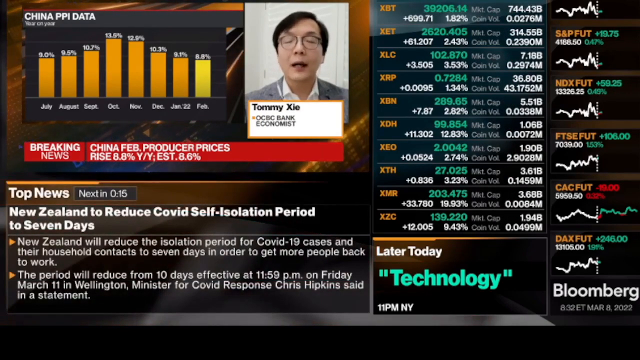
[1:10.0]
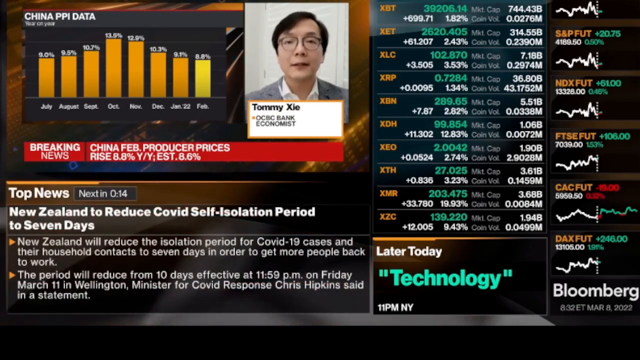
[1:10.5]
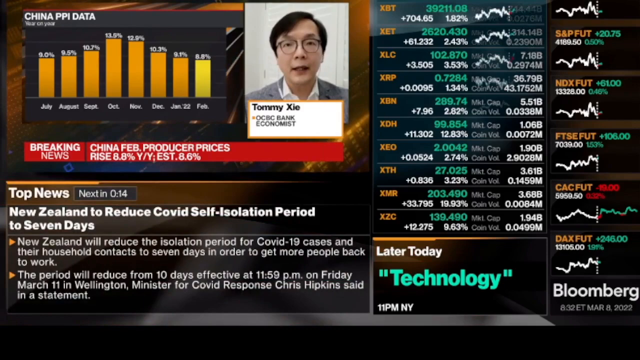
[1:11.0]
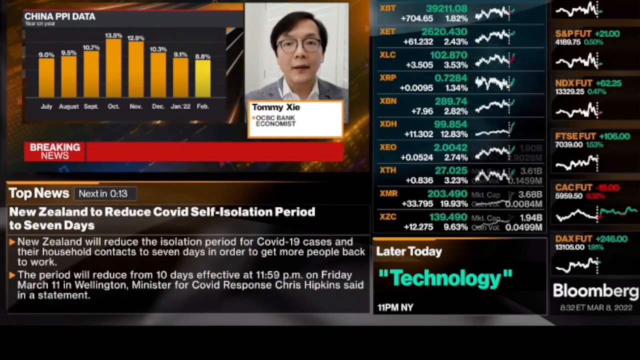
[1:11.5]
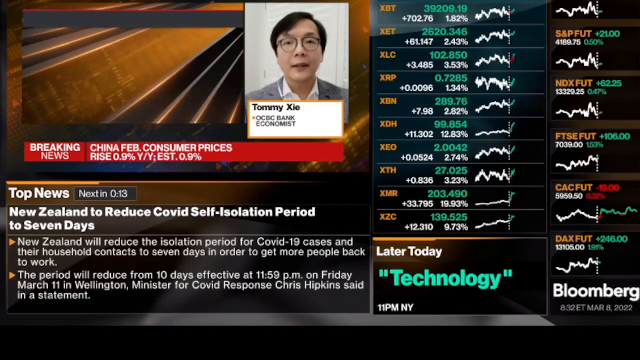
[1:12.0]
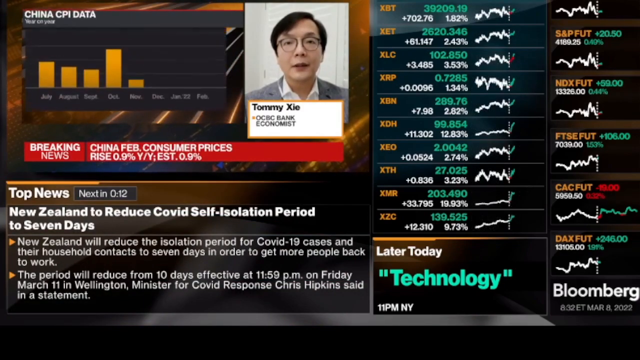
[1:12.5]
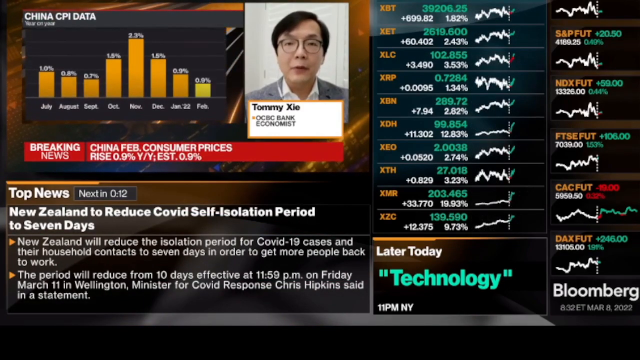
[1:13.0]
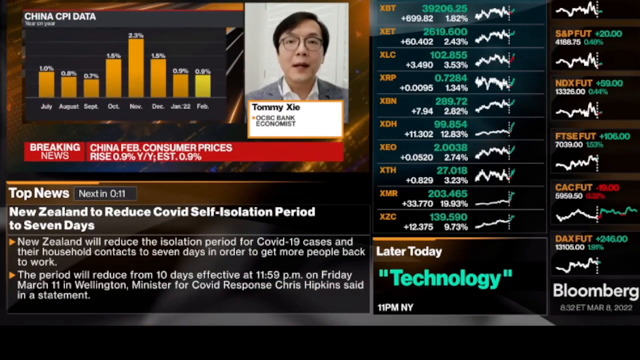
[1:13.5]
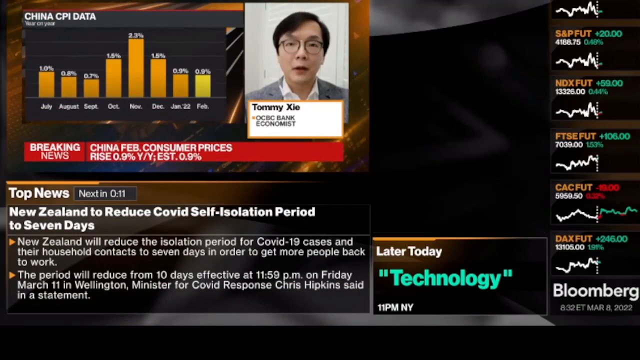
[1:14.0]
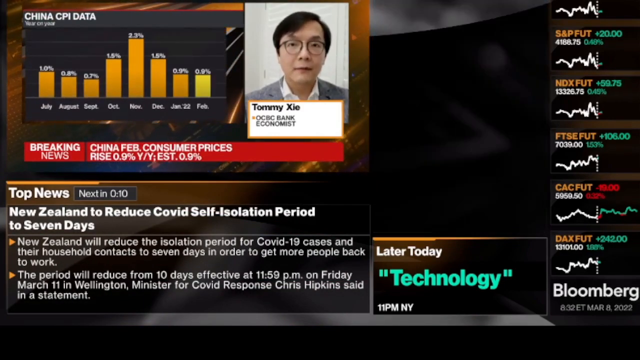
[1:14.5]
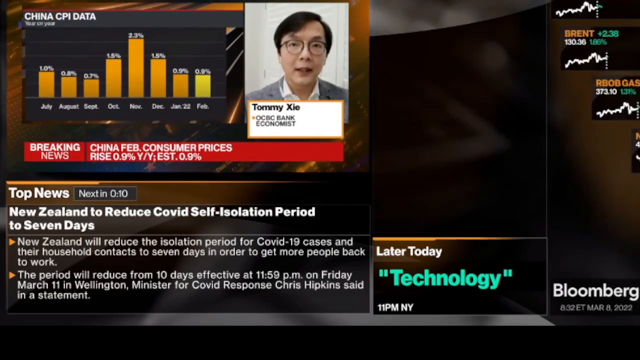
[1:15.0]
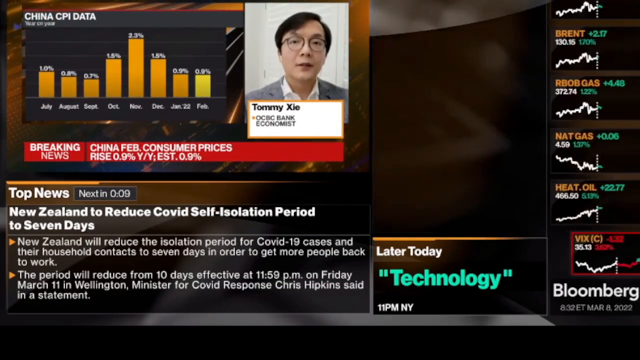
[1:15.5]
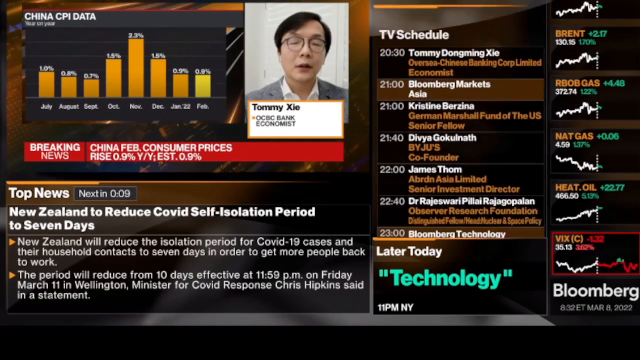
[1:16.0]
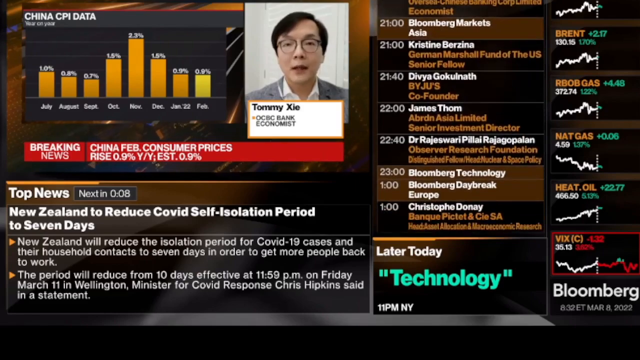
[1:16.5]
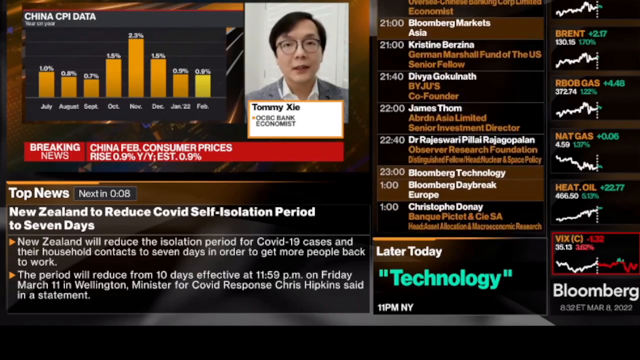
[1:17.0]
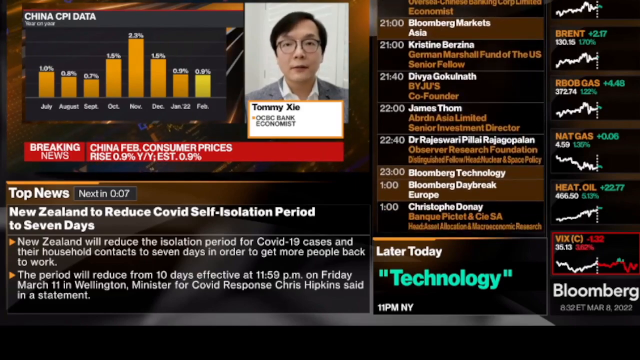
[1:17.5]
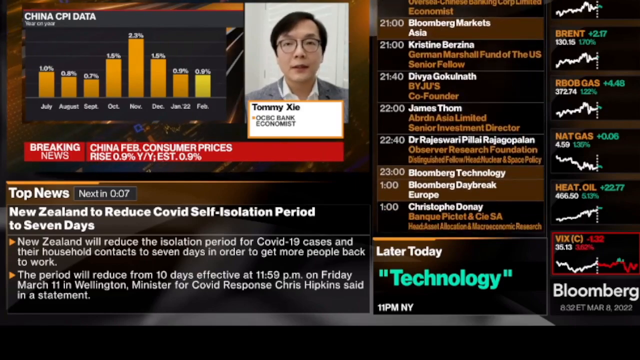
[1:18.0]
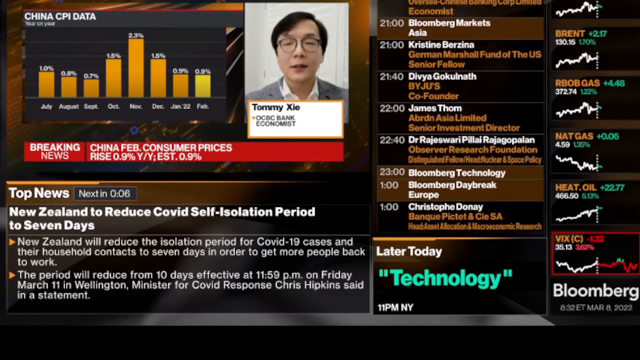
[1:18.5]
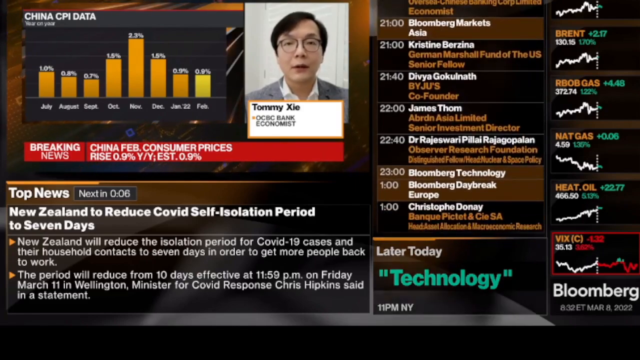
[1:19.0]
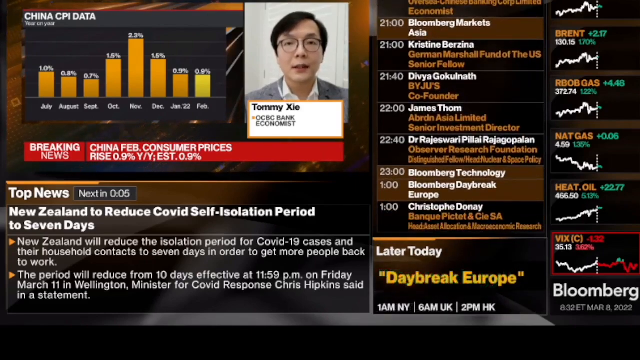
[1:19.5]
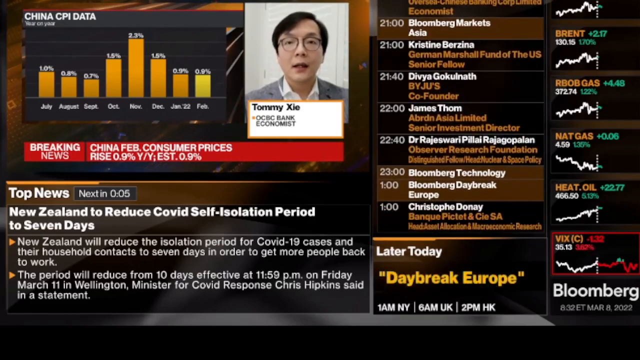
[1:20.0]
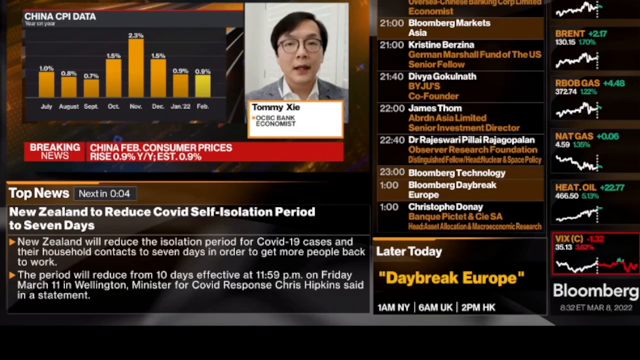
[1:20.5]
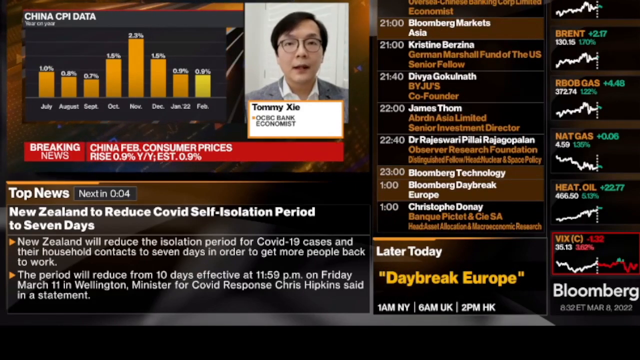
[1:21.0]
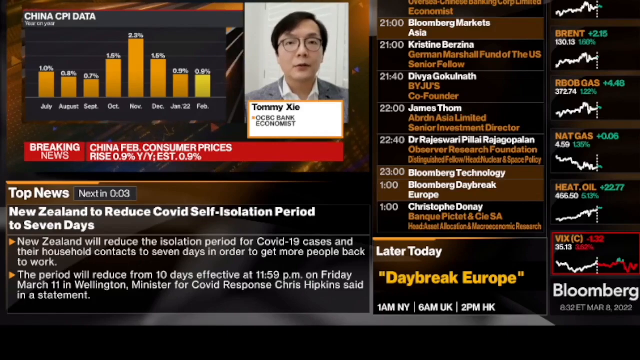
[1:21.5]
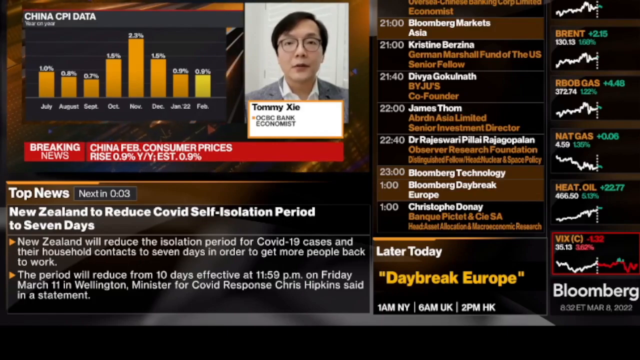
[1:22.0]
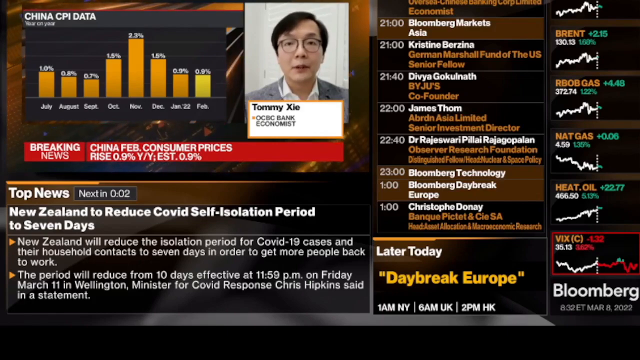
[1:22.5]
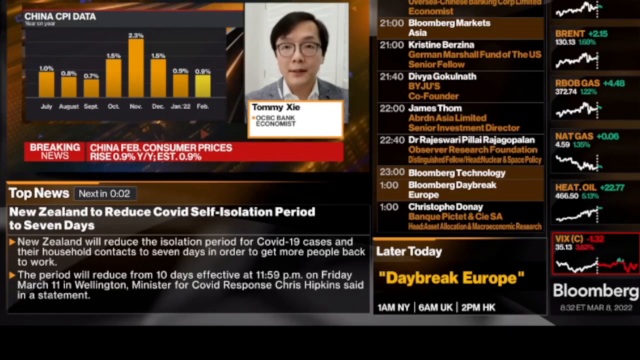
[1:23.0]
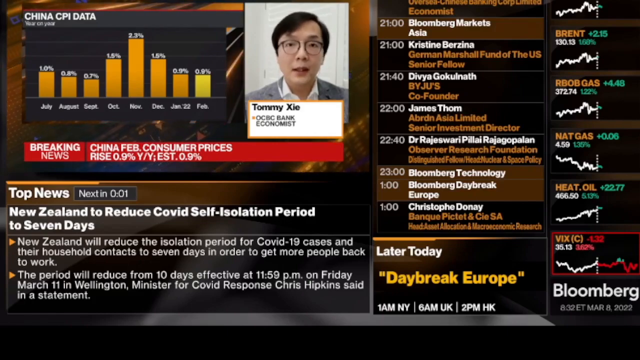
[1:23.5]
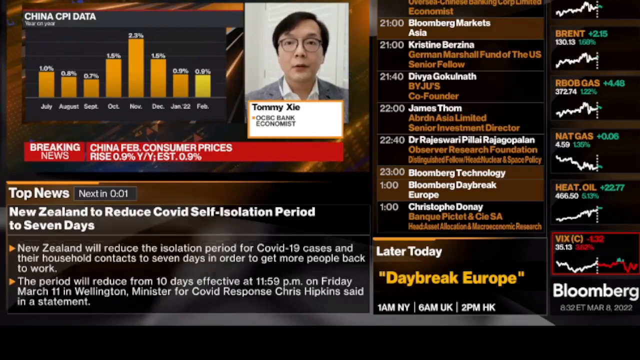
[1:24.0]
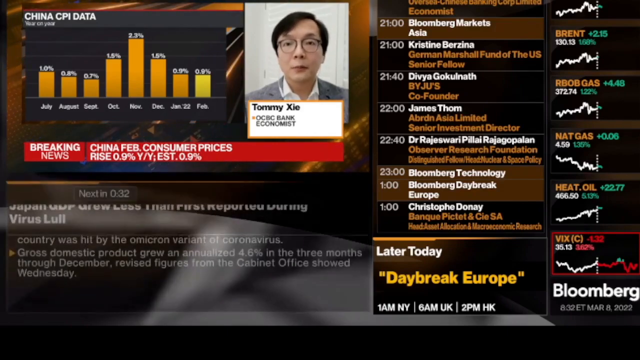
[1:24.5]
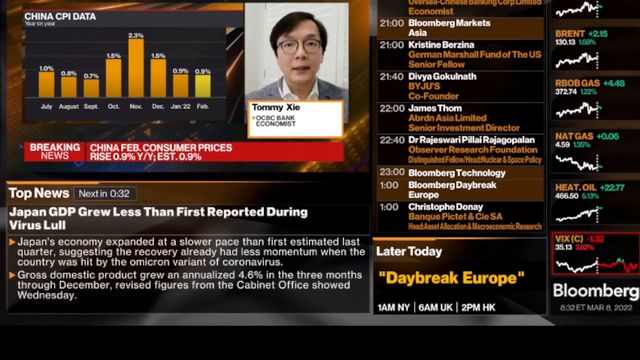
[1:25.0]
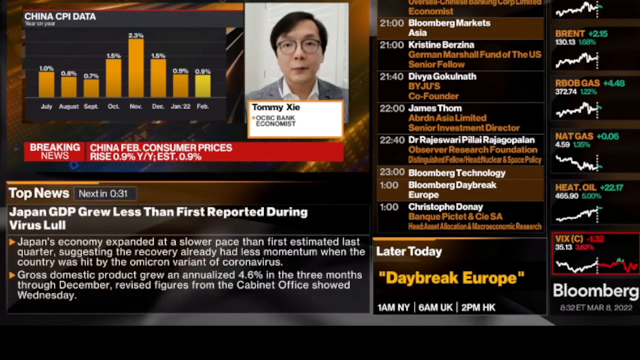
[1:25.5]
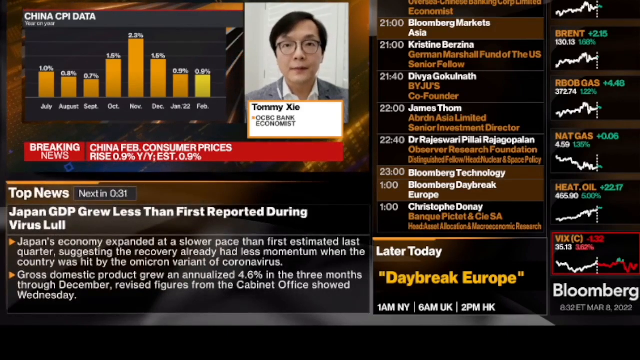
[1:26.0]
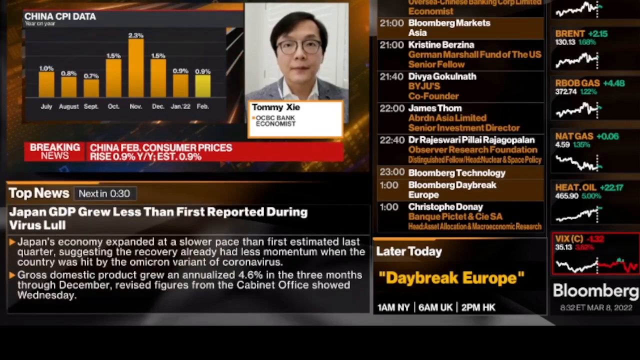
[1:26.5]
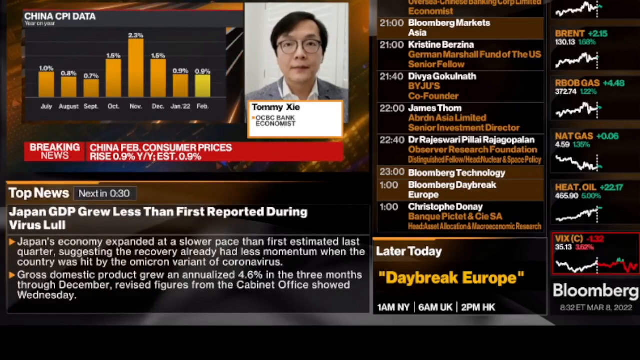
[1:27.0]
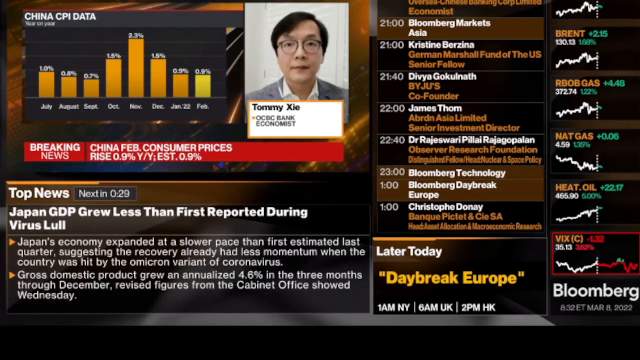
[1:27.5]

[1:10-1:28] Tommy continues talking next to the bar graph. A timer counts down next to the top news section, currently showing eight seconds left. What looks to be a schedule of future newscasts is shown, with their times, who will be featured, and their titles and workplaces. A new program called Day Break Europe appears in the Later Today section, and more stocks on the right side show gains or losses. After the timer next to the top news section runs out, another topic briefly appears with another timer counting down from 31 seconds. Its title begins "Japan GDP grew less than the first reported." Two bullet points underneath state that Japan's economy is expanding at a slower pace than estimated and that its domestic product grew 4.6% in the last three months.